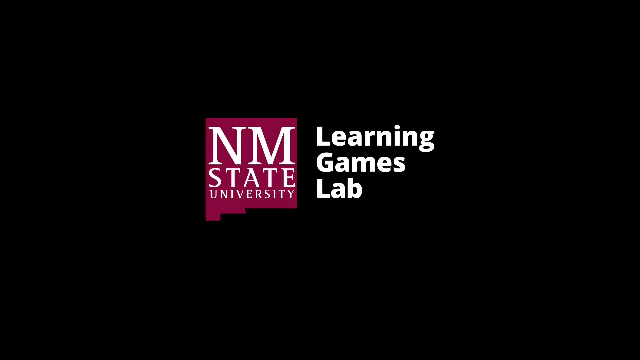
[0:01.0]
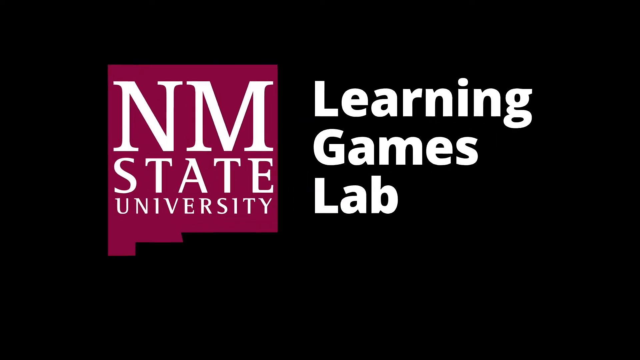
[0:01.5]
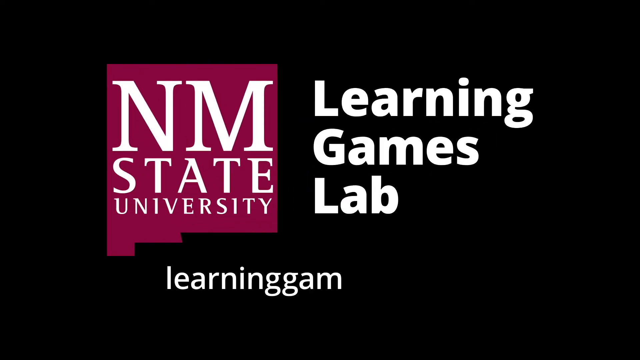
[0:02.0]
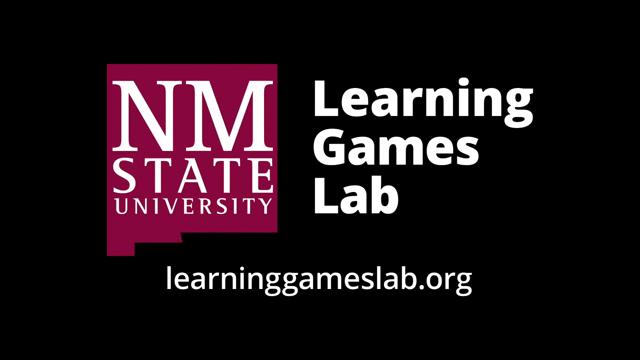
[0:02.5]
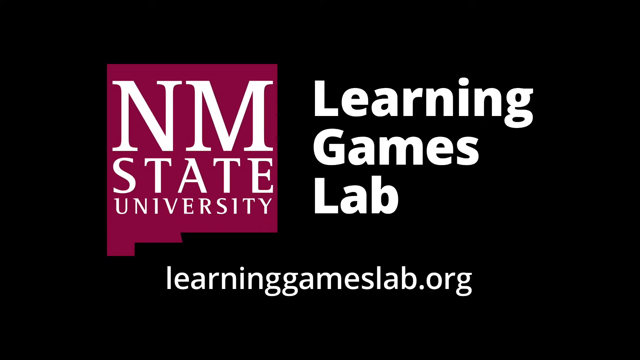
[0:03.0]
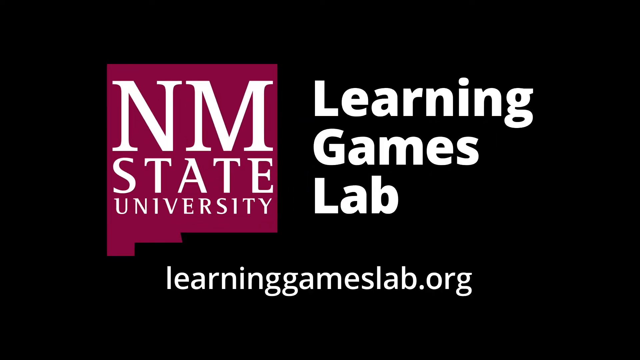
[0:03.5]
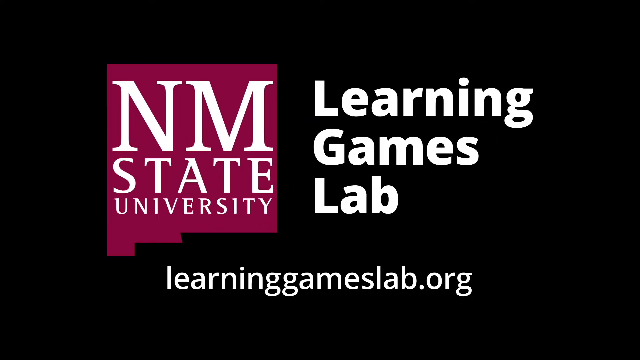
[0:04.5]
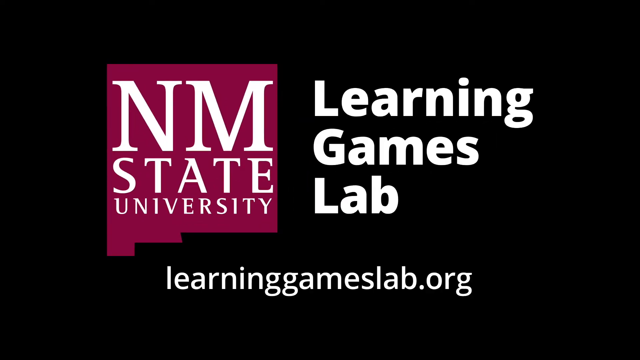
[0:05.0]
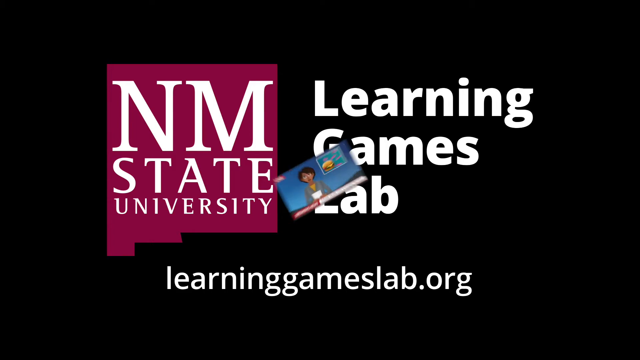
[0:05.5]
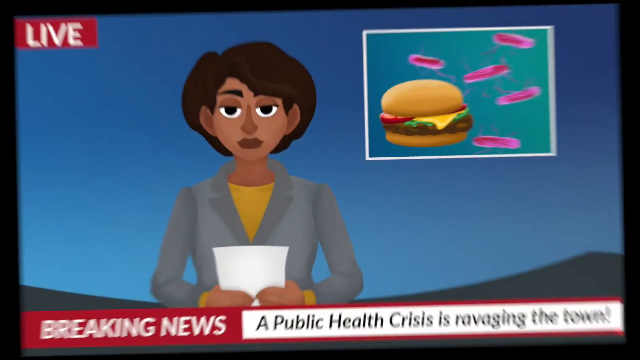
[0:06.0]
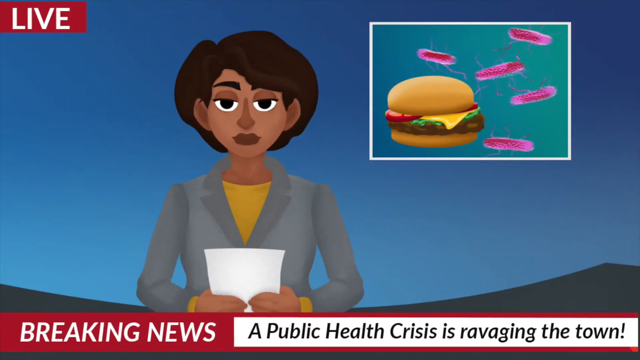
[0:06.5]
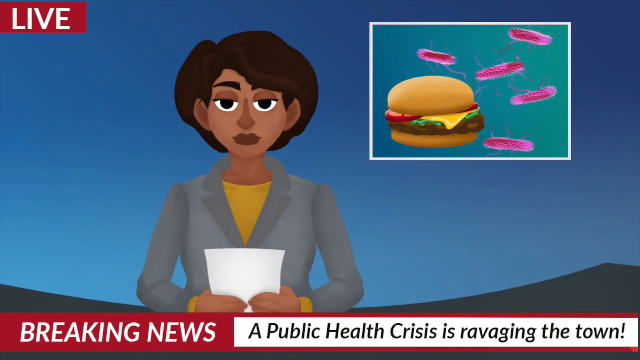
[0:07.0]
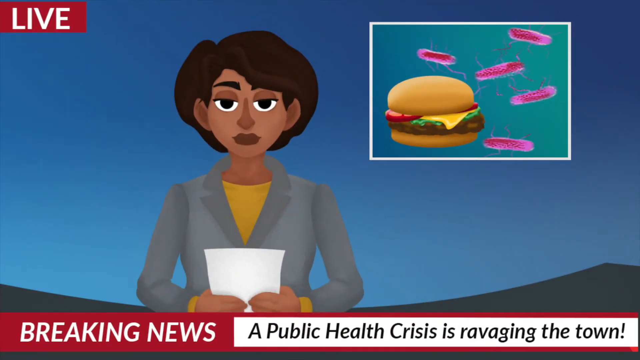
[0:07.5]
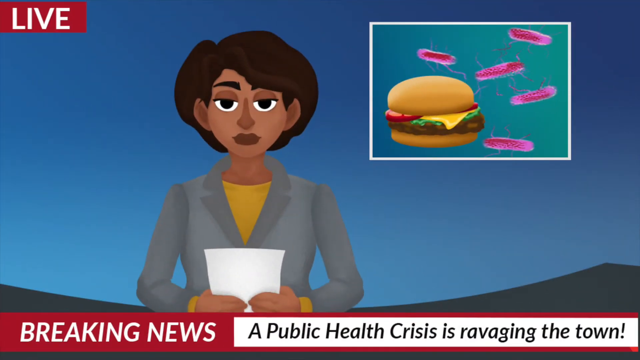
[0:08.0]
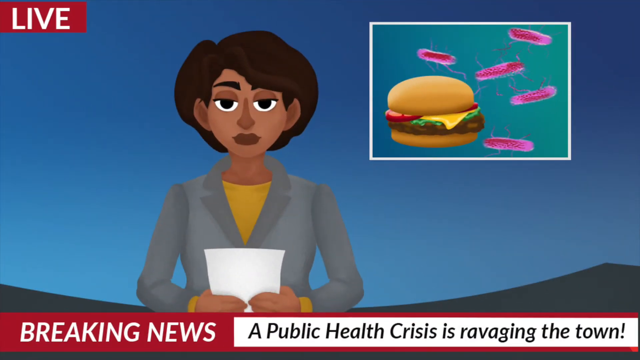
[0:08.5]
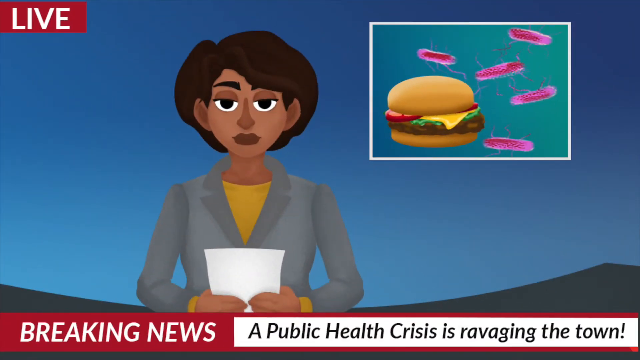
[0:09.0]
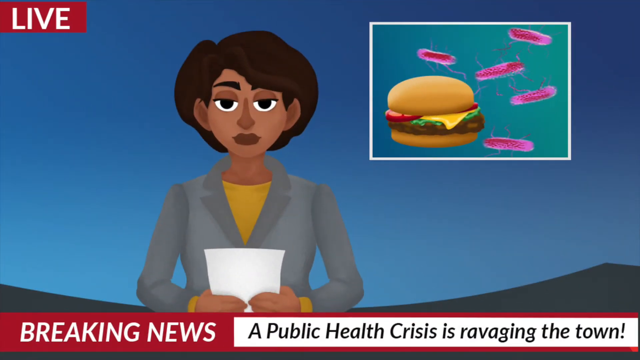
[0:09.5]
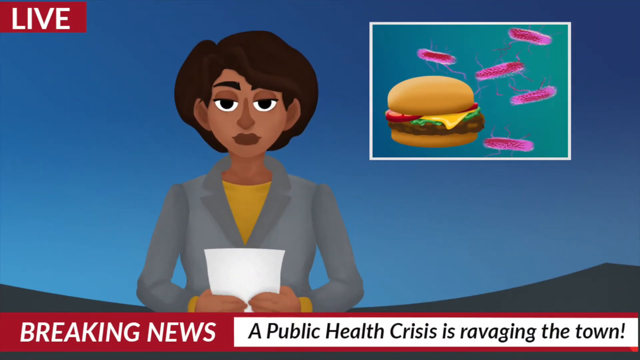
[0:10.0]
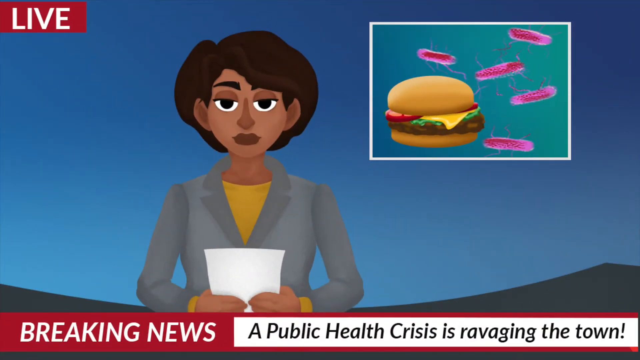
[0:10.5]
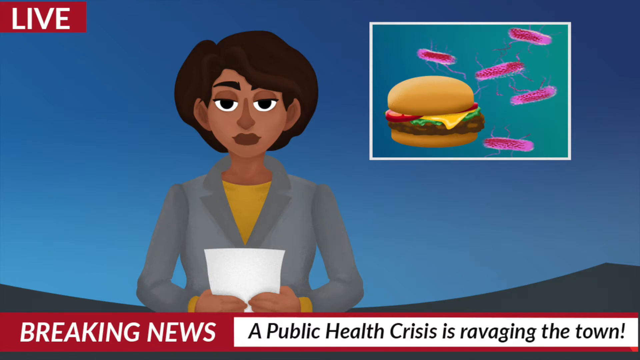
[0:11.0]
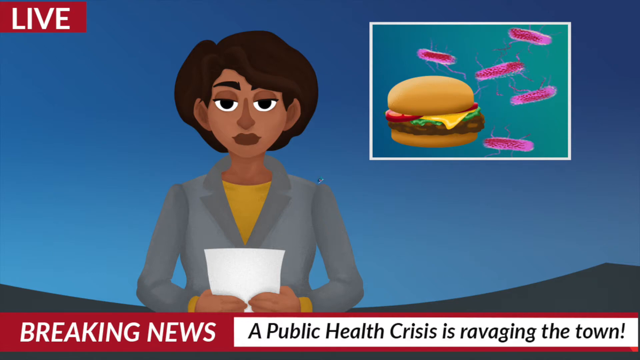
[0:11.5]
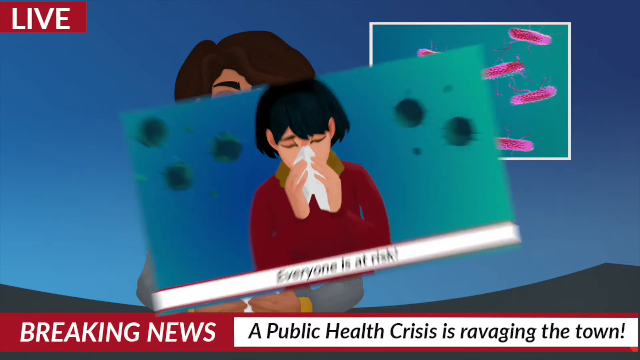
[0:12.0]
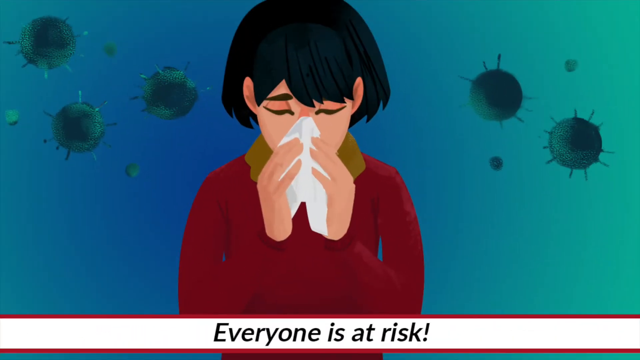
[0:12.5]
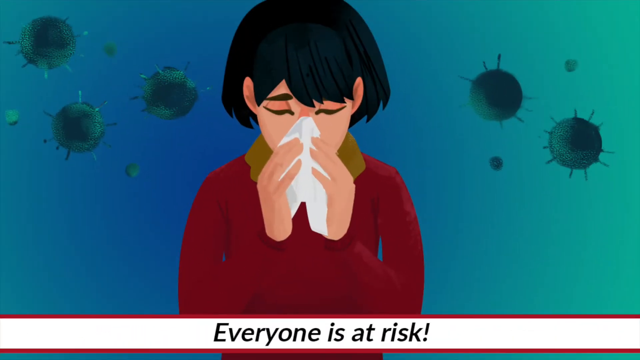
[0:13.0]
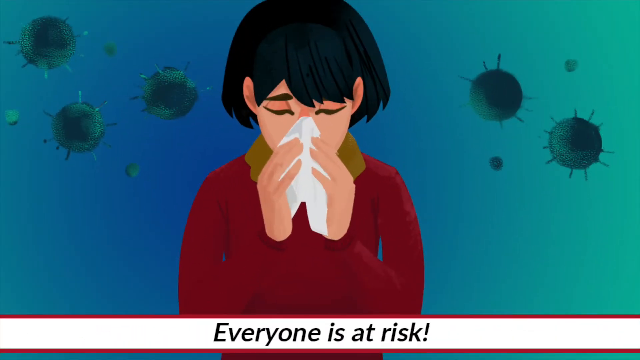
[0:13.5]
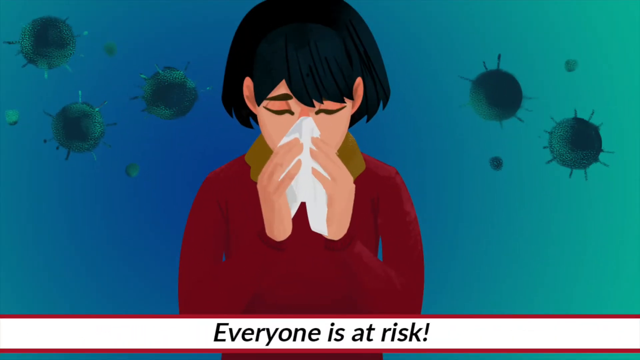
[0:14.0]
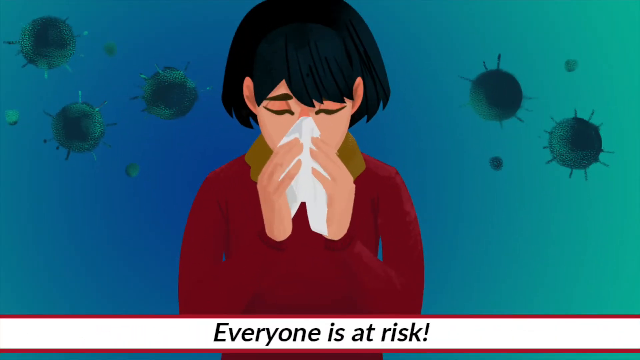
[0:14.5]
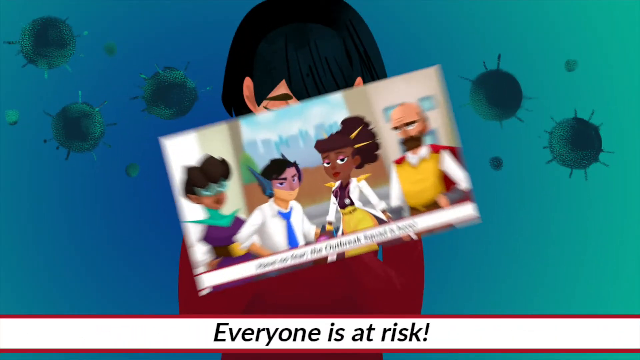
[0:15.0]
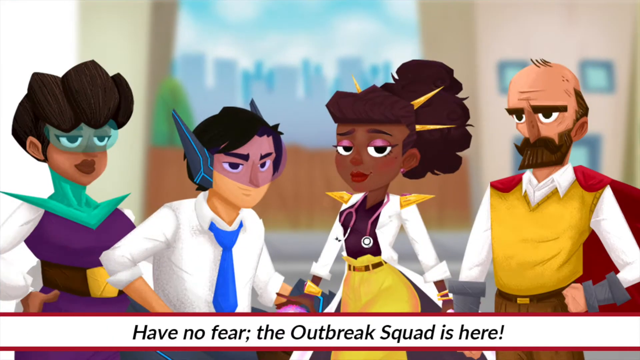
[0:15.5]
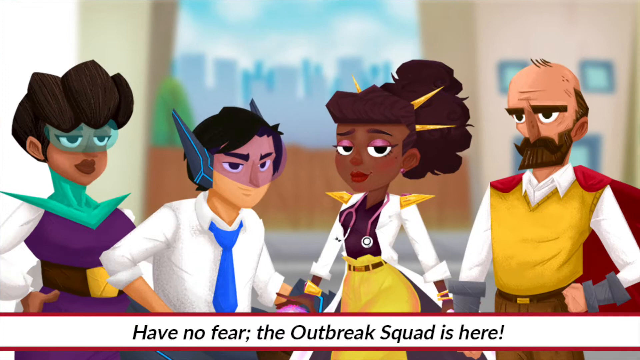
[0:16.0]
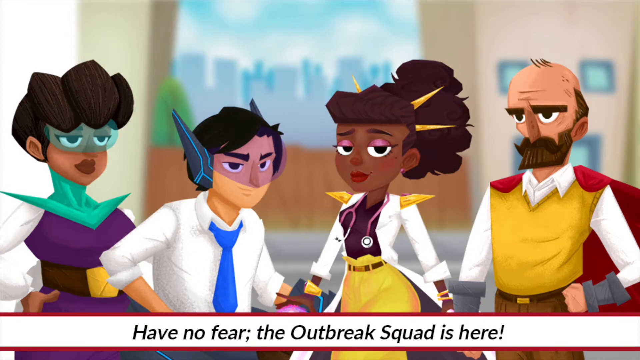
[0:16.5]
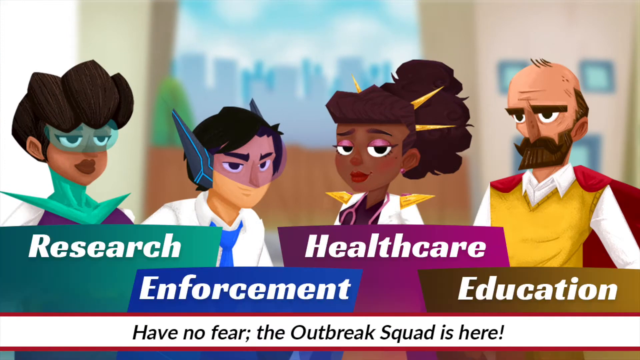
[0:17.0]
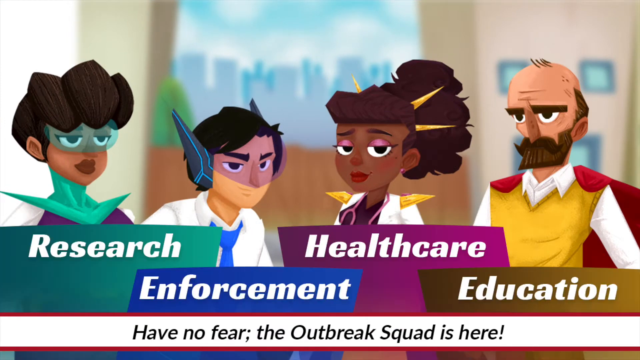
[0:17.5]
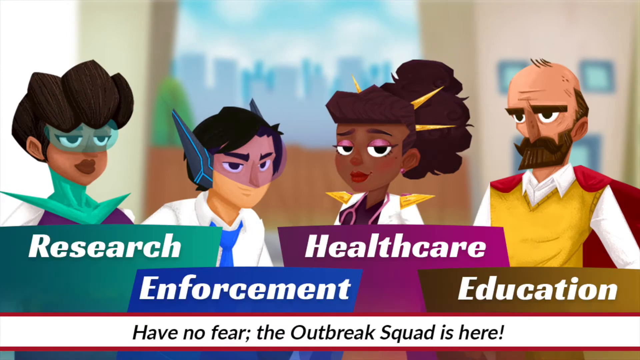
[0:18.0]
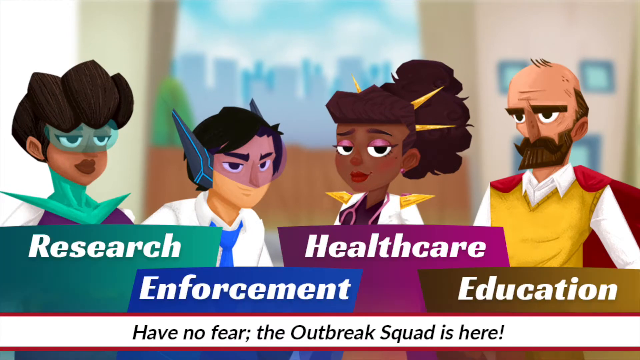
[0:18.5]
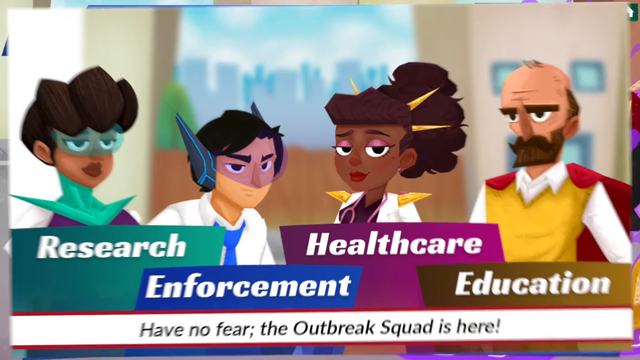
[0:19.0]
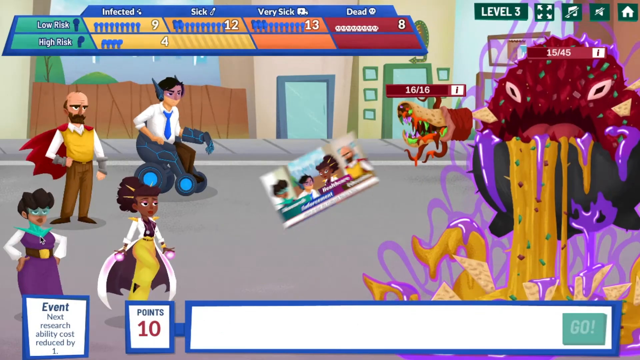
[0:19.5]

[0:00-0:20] The video opens on a black background. On the left is a burgundy shape, largely square with some deviation at the bottom, bearing the lettering "NM State University"; to the right of it is the text "Learning Games Lab", and below those two bits of text is "learninggameslab.org". Next comes a newsreader-type graphic of a woman, perhaps of Asian origin, with quite a lot of brown hair, a grey jacket and a yellow round-neck shirt underneath. She holds a piece of paper in both hands. At the bottom of the screen is a banner reading "breaking news" in white text on a red background, followed by black text on a white background: "A public health crisis is ravaging the town." At the top of the screen there is also a square graphic with a hamburger. The scene moves to a separate graphic of a young woman with dark hair and a red sweater who has a tissue in both hands and appears to be blowing her nose; small graphics indicating bacteria are spread around the page. Then comes a graphic of four individuals who appear to be depicted as superheroes. On the left is a woman with a green transparent mask, who is research. To her right is a young man with dark hair wearing a yellow mask, a white shirt and a blue tie, with a matching blue banner identifying him as enforcement. The third is health care, and furthest to the right is a balding man with a beard wearing a red cape over a white shirt and a yellow tank top, who is education.